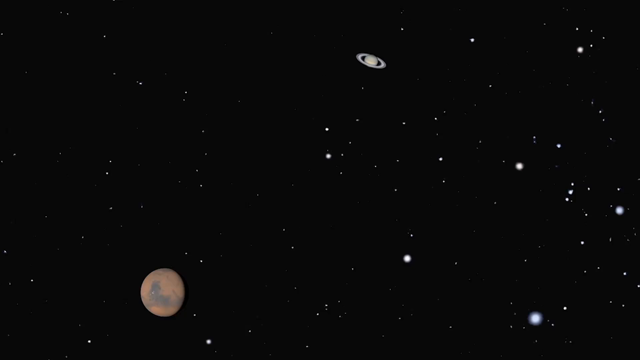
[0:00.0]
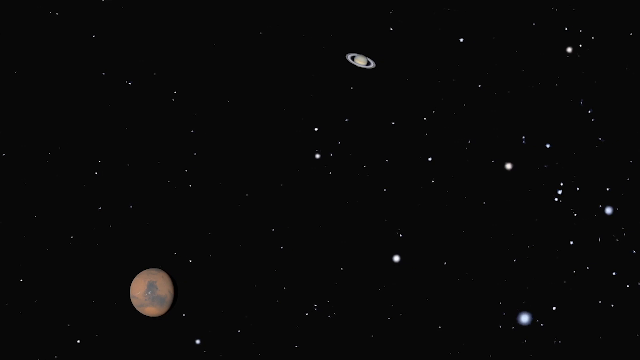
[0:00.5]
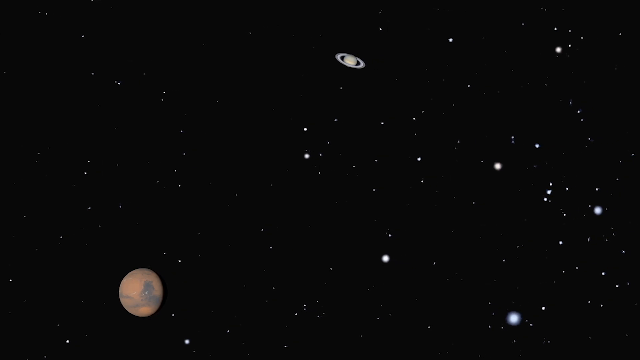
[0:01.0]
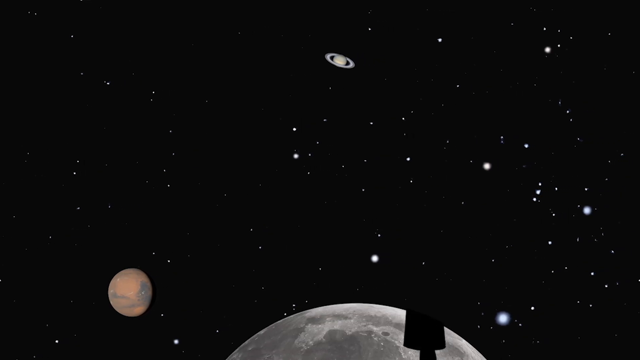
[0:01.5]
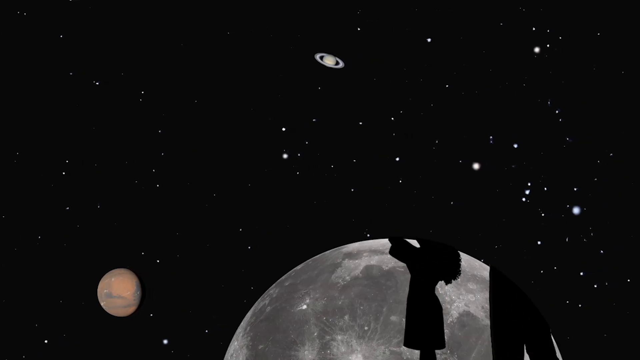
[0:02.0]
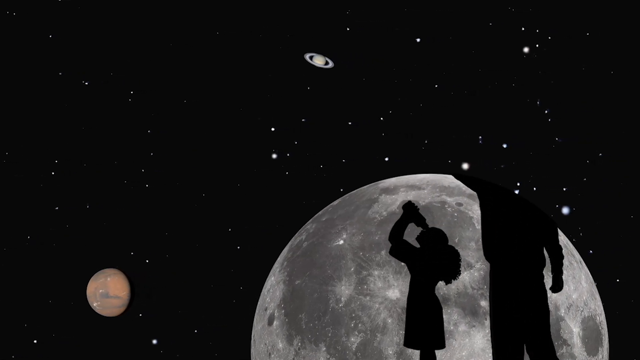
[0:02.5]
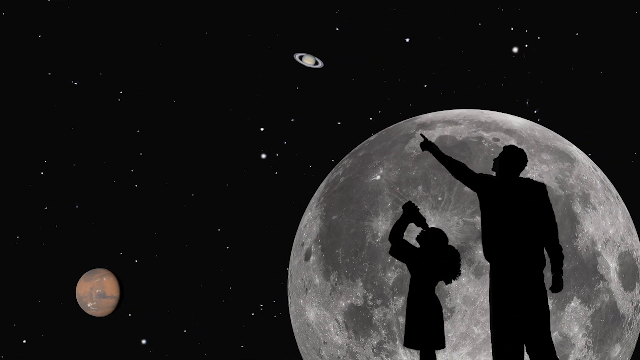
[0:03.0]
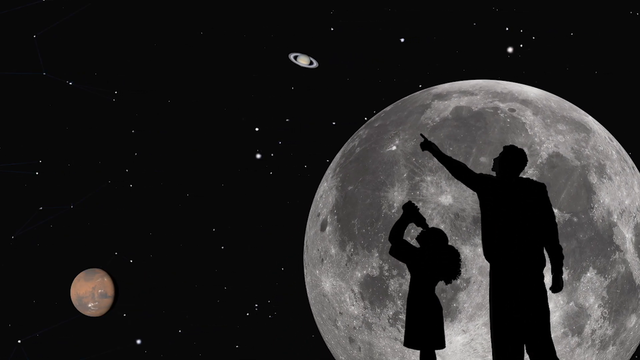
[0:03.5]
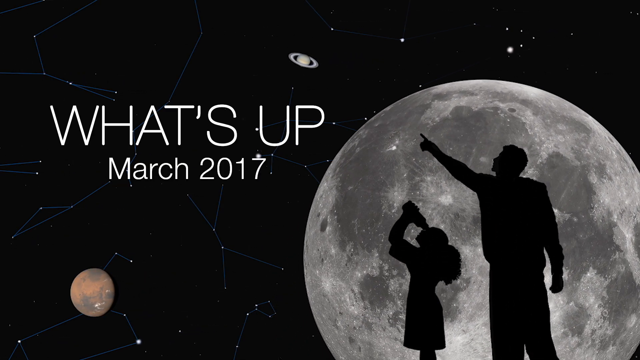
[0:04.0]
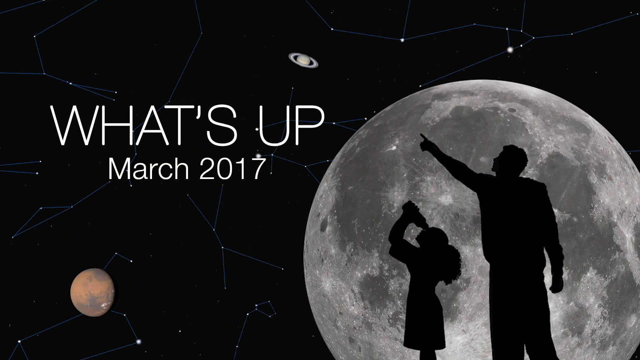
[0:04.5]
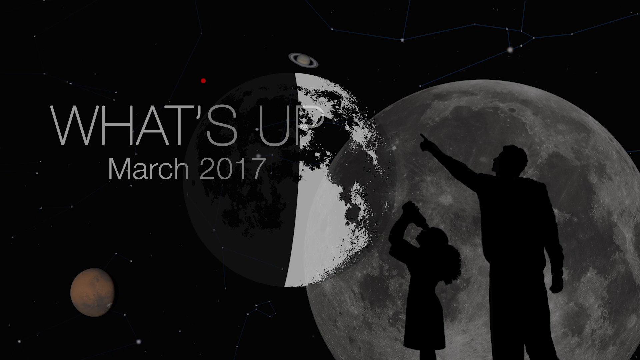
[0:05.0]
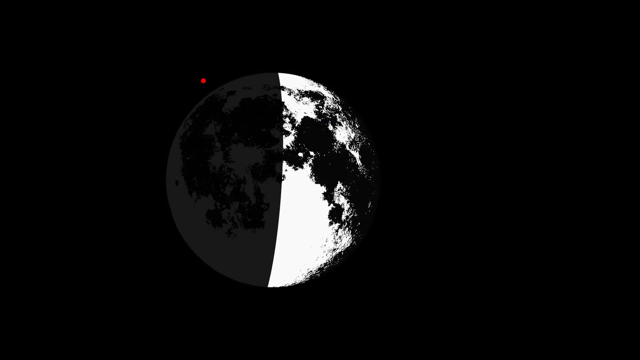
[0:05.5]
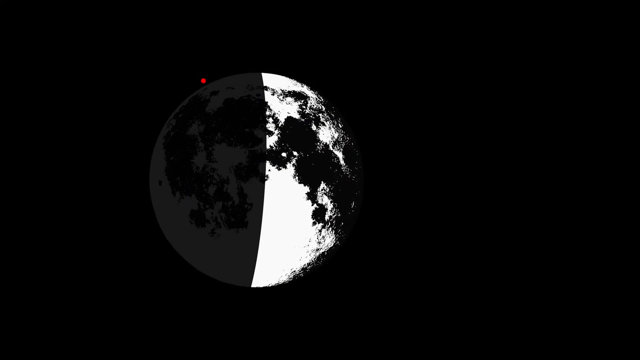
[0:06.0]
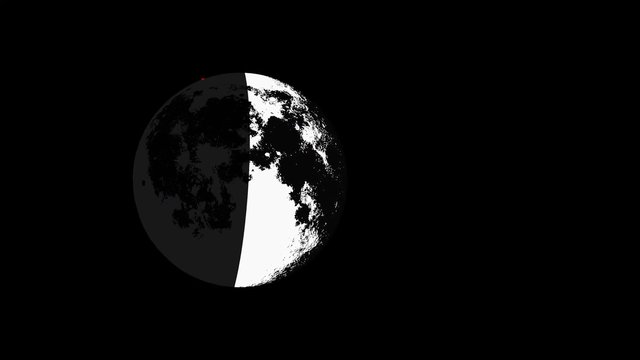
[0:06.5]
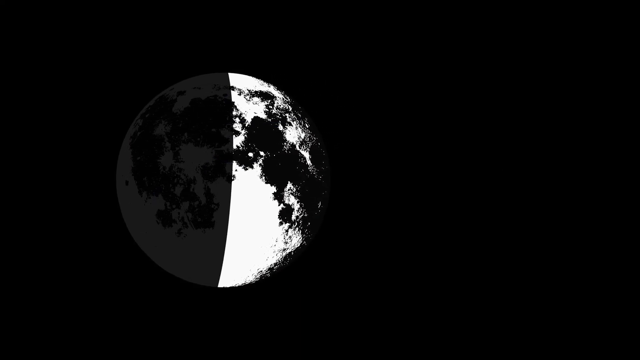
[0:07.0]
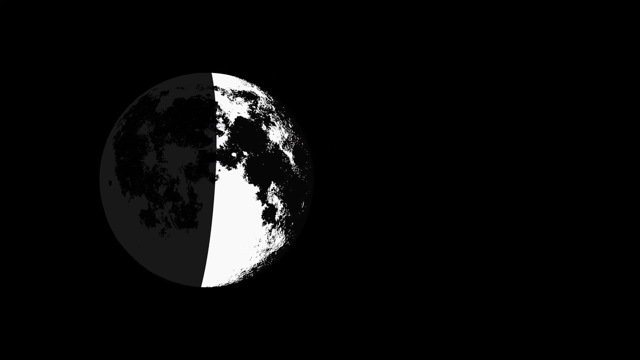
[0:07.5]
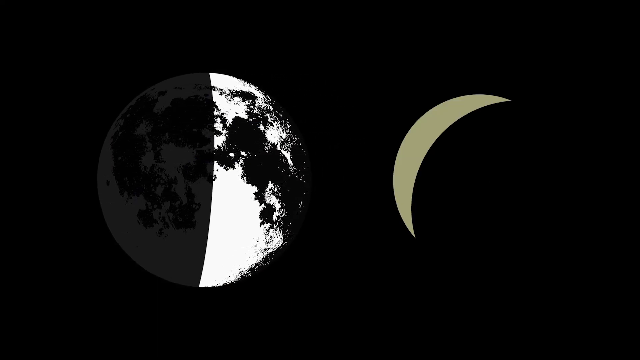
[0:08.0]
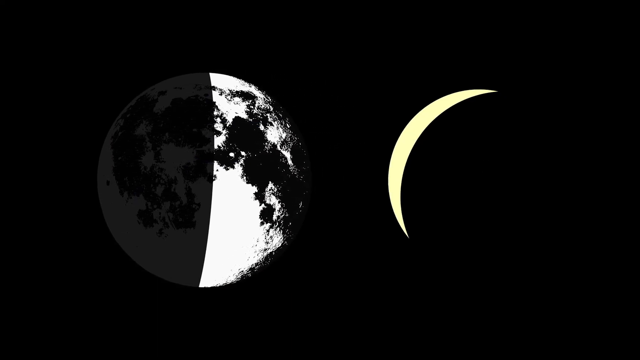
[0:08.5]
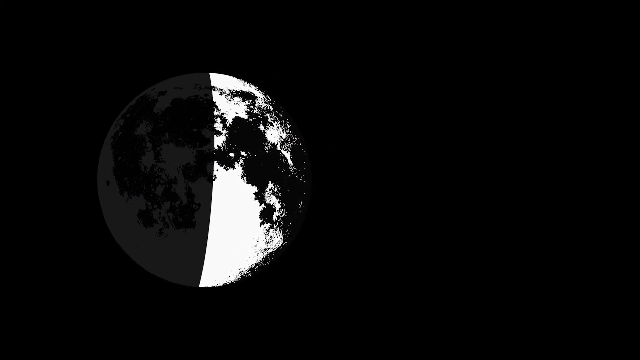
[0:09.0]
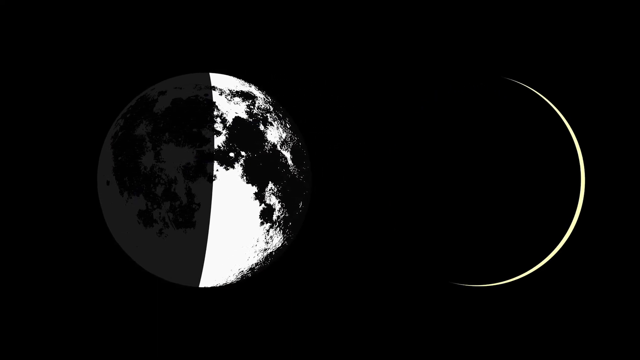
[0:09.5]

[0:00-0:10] A black space background holds a number of different planets and many different stars, with lights scattered in isolation across the darkness.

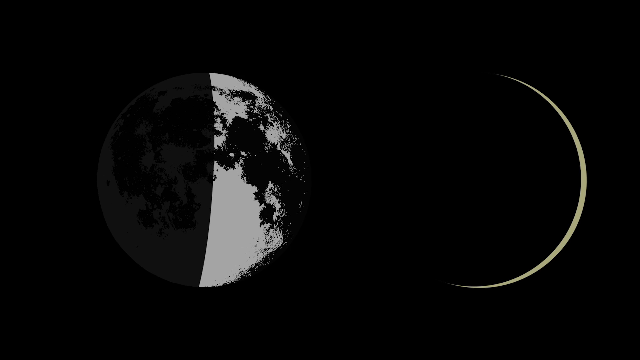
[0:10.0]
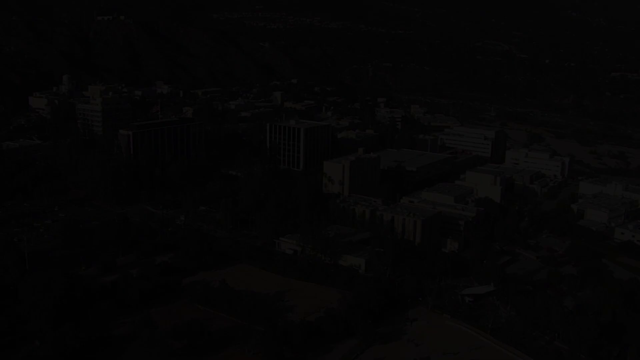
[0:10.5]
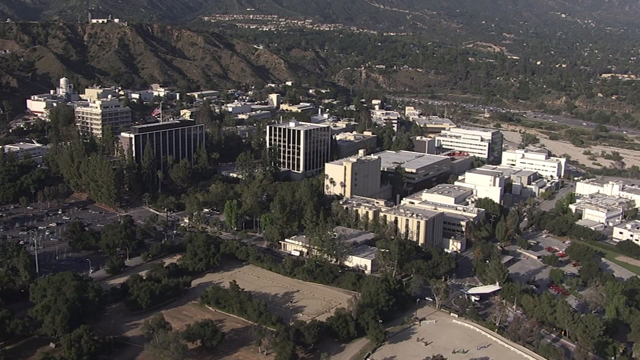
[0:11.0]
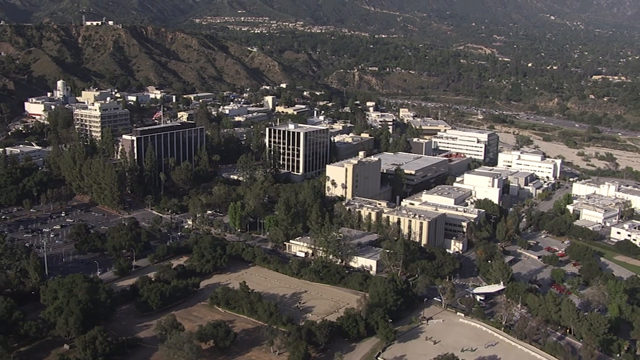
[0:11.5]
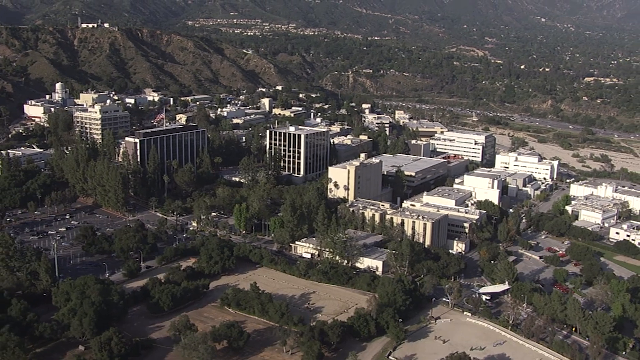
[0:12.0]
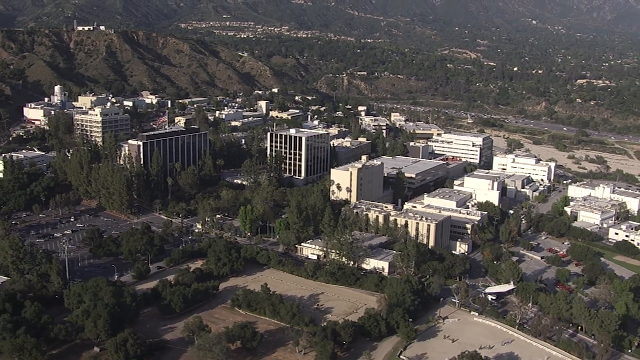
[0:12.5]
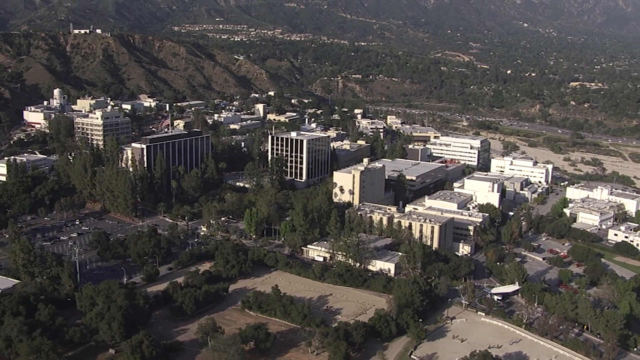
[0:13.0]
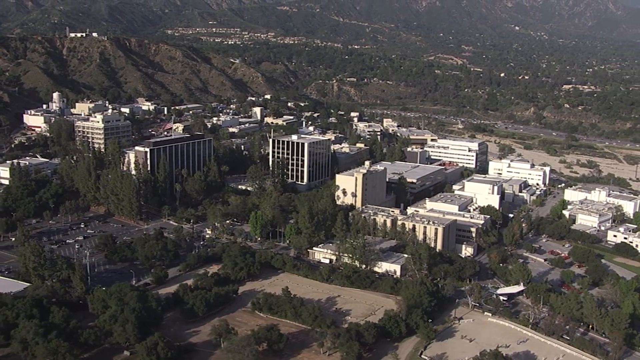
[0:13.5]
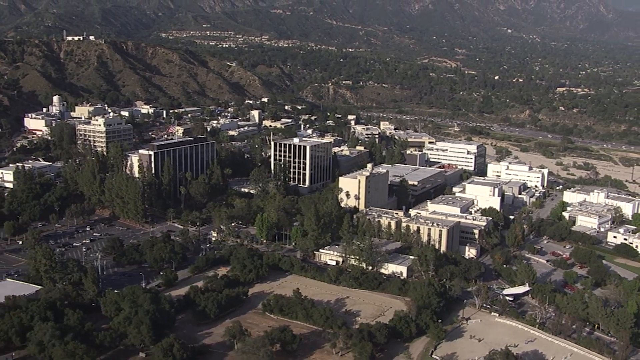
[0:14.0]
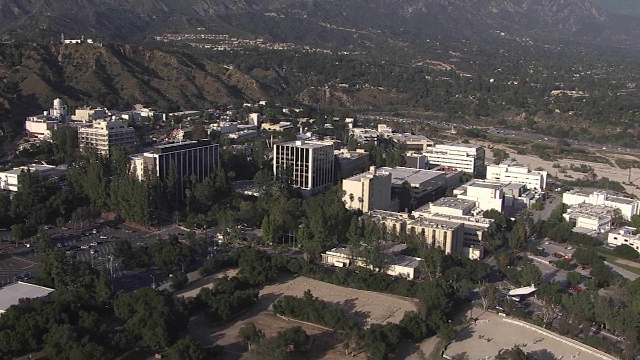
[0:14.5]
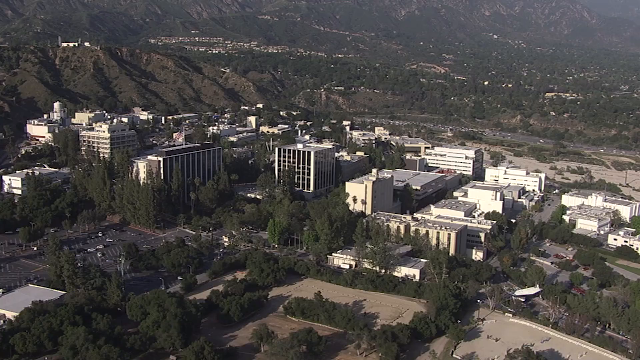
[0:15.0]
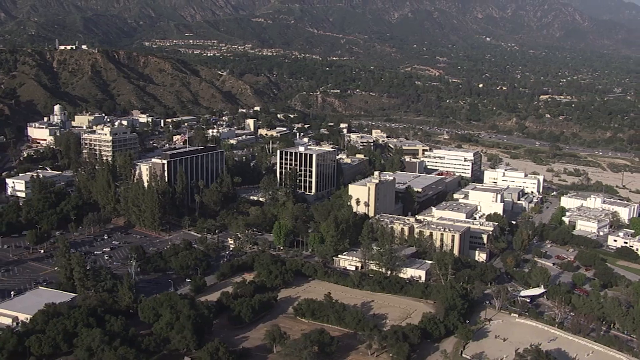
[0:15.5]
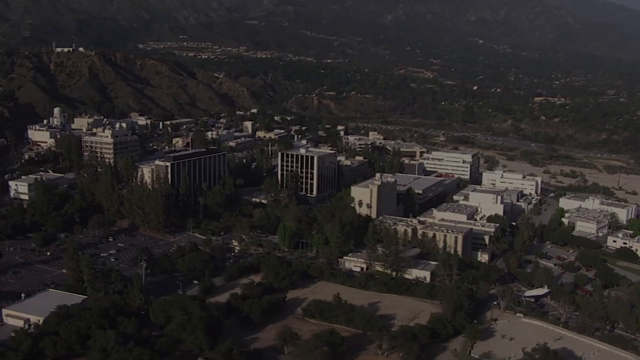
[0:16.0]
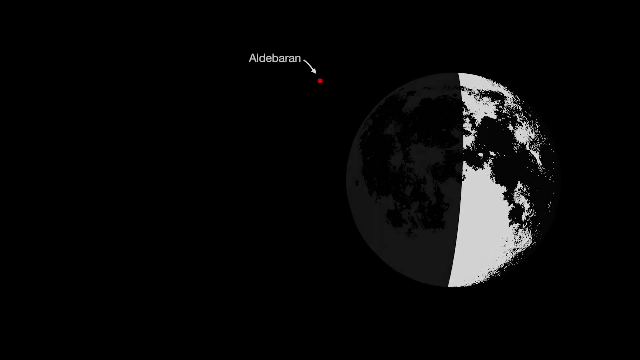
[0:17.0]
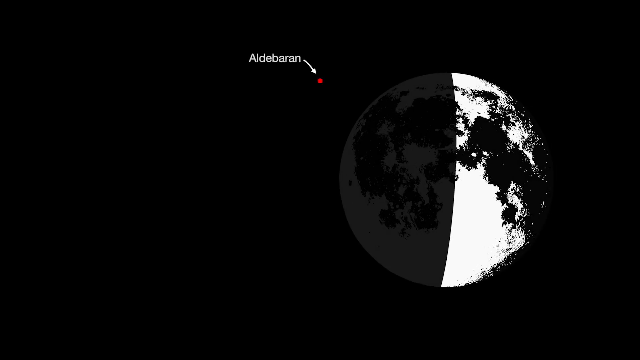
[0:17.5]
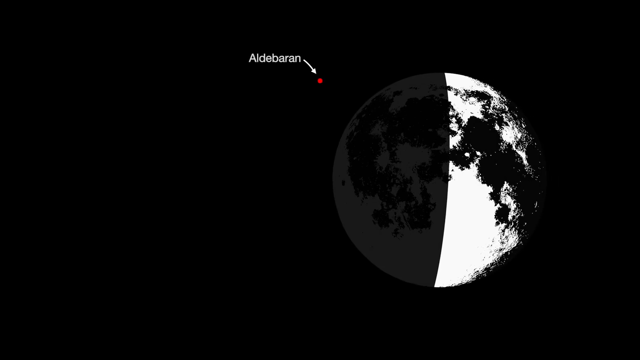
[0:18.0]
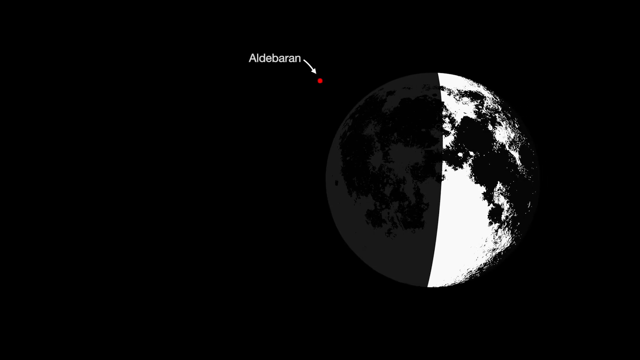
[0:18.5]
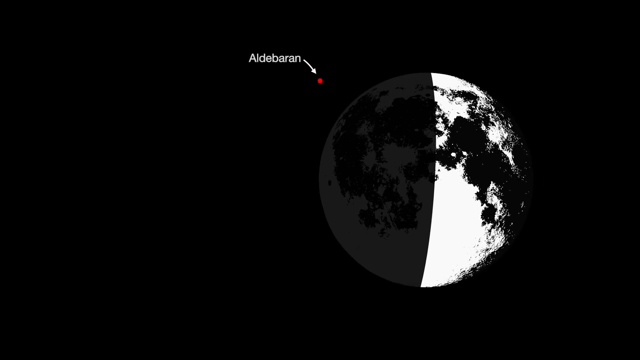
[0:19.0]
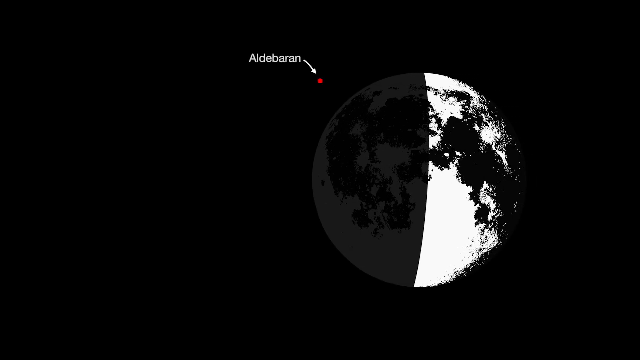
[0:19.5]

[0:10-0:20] Different buildings and trees appear. Then a view of space shows the Earth and the Moon on a black background. The Earth is half dark and half lit, with the dark side on the left and the light side on the right.